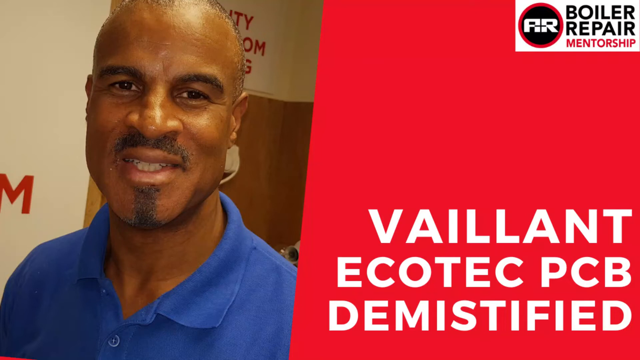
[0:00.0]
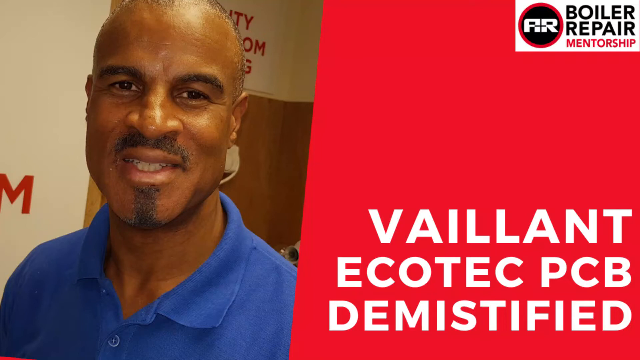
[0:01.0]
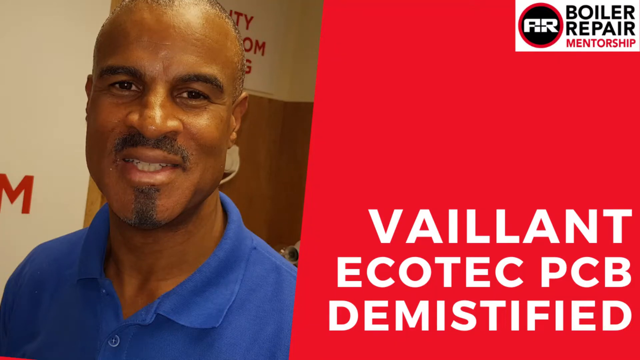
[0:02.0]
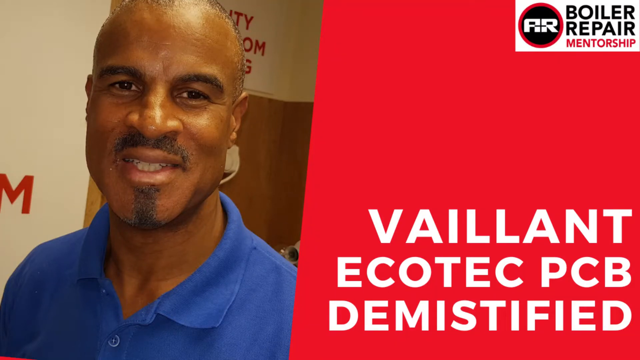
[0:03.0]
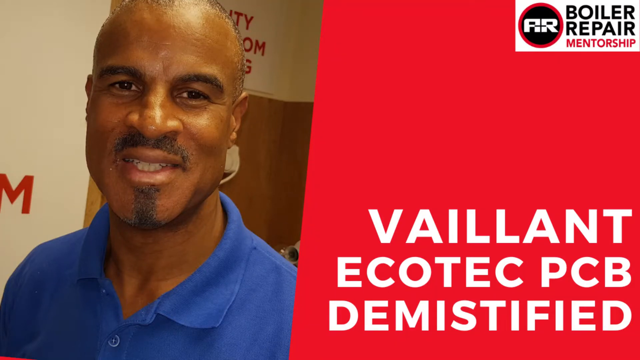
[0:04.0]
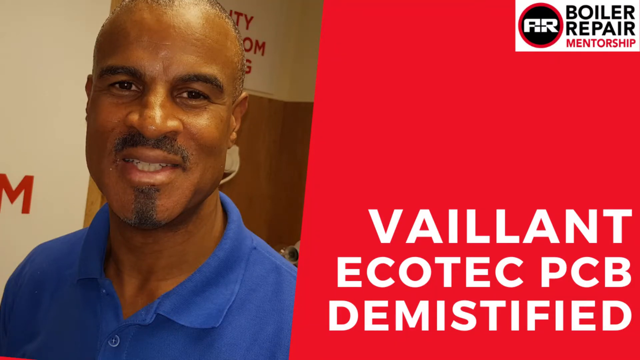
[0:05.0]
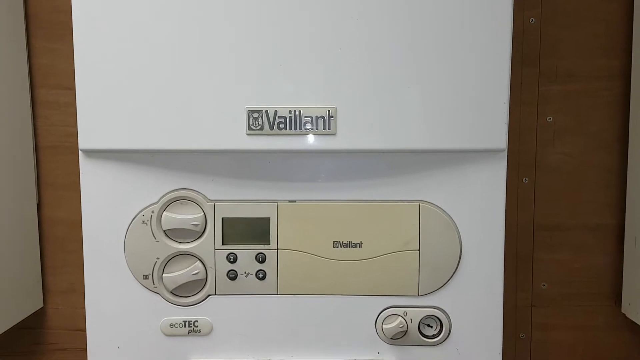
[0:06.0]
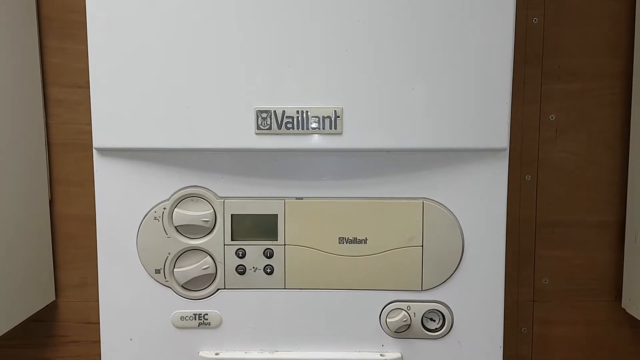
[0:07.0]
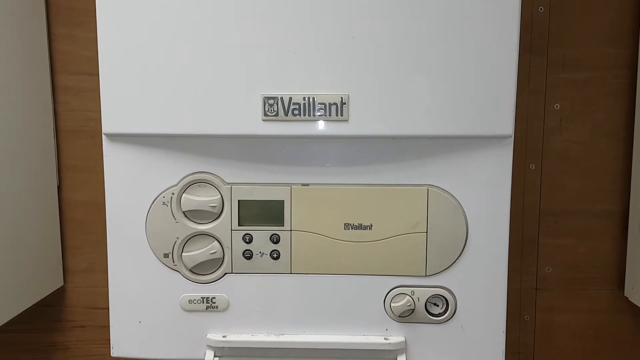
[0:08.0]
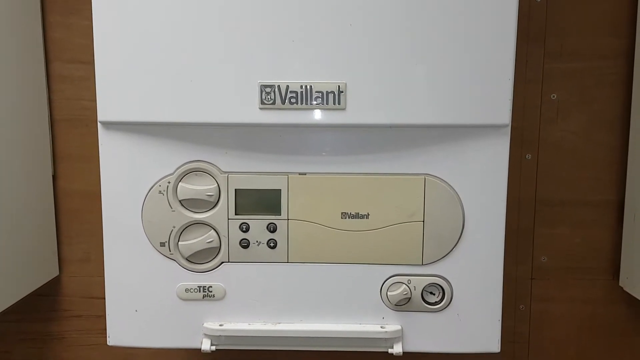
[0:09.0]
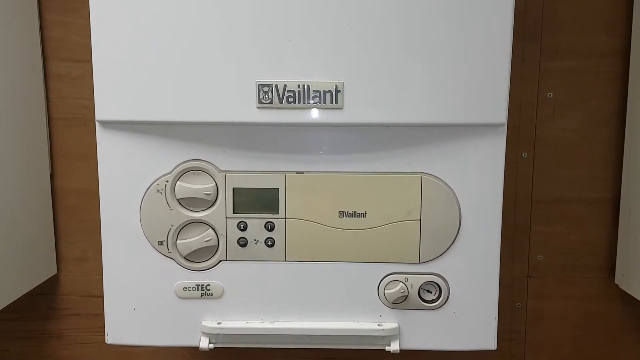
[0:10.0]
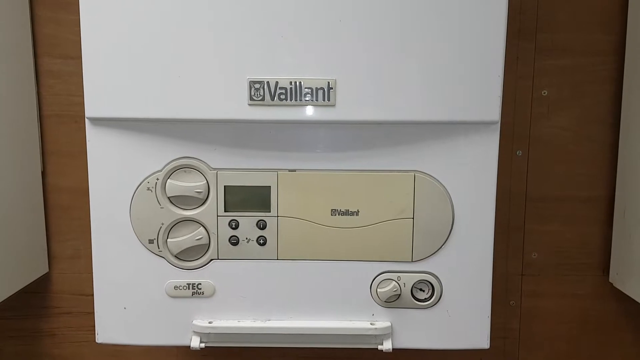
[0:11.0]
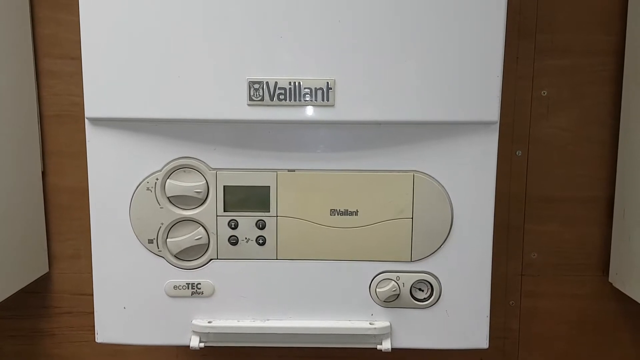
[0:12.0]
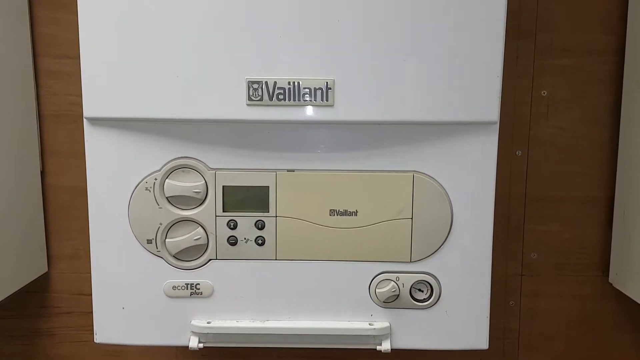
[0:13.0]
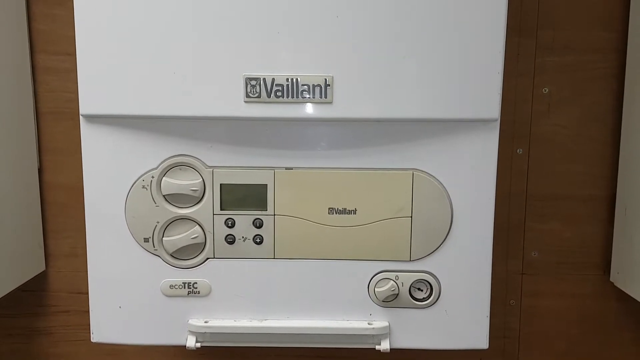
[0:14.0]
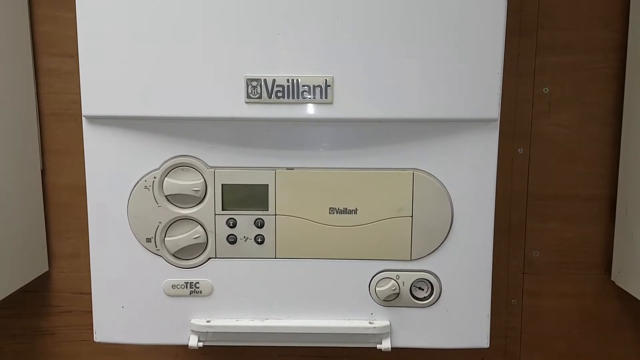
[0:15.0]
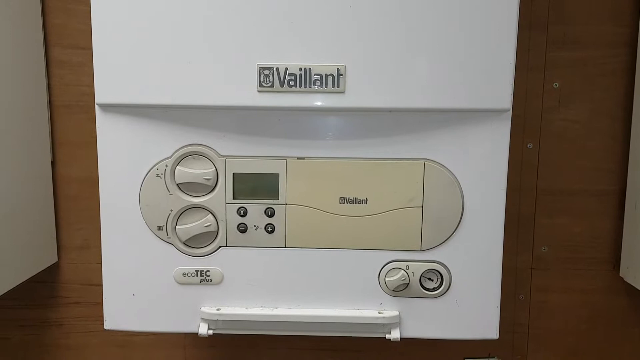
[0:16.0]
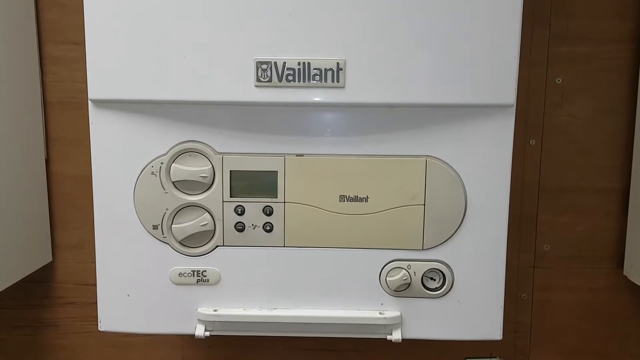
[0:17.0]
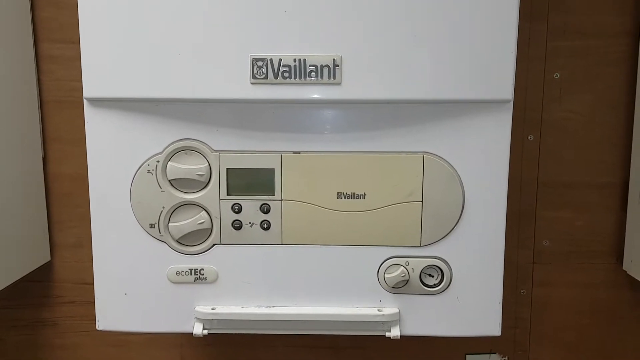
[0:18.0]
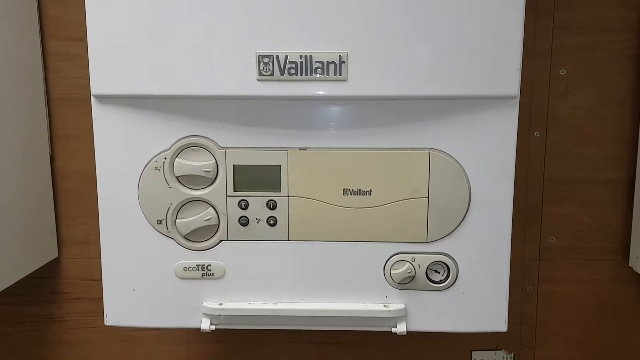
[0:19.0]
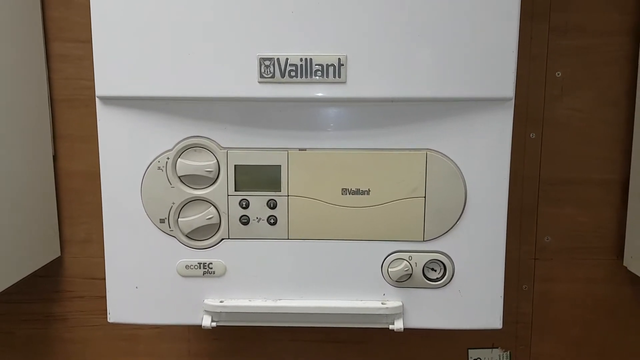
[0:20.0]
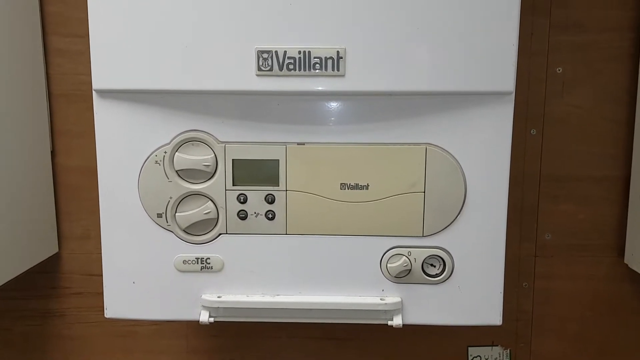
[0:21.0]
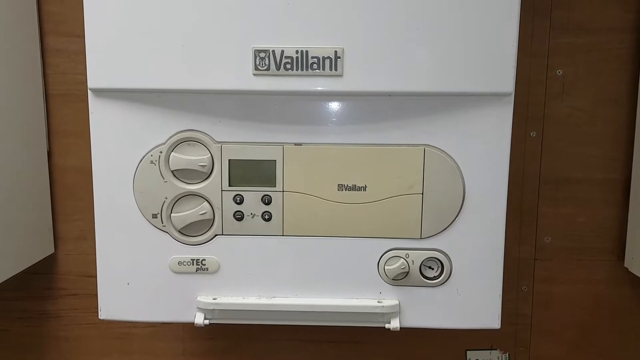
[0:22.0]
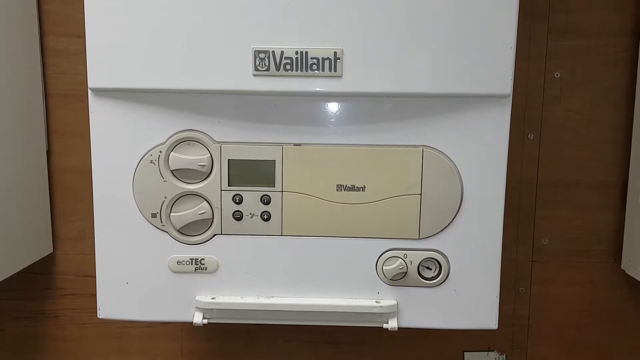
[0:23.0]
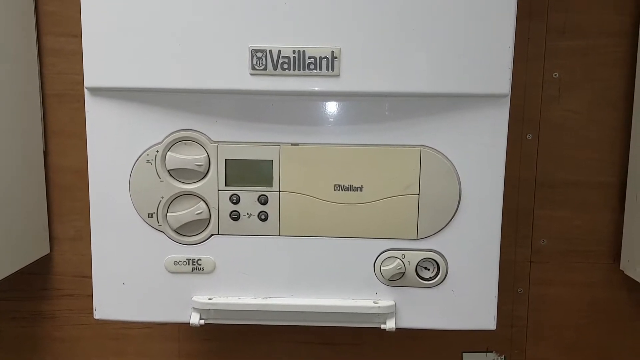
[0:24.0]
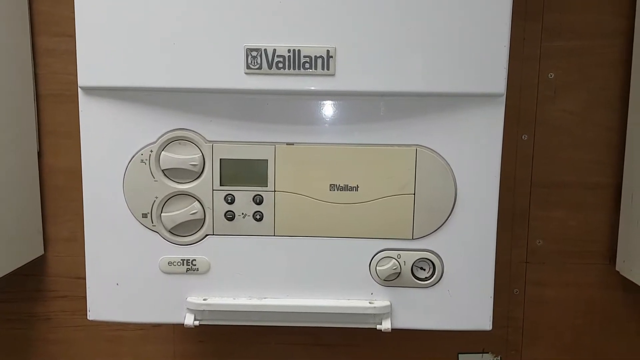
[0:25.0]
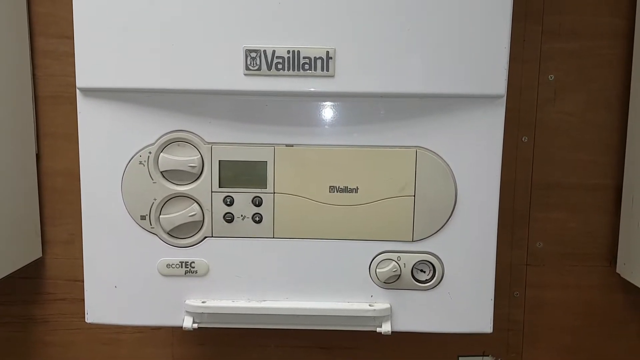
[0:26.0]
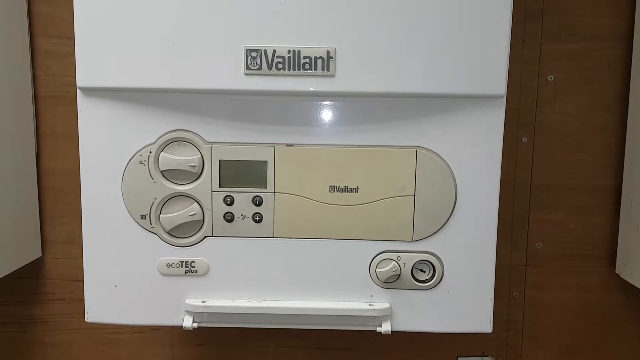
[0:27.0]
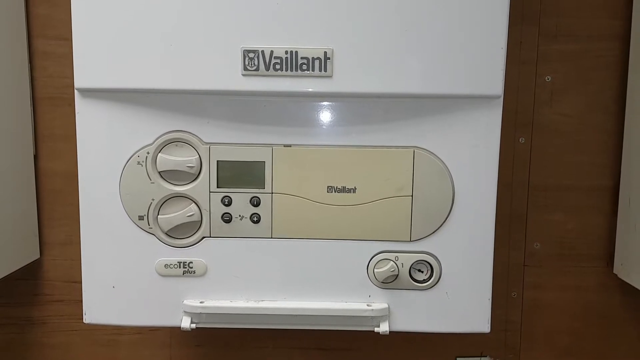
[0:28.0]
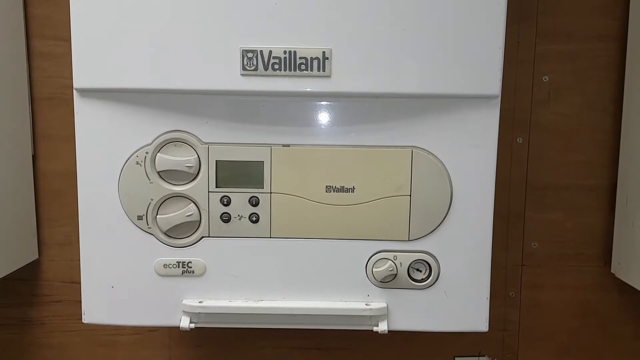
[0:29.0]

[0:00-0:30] A title names VAILLANT Ecotech PCB Demystified, by AR, Boiler Repair Mentorship. A Vaillant device is shown: a plastic-looking unit that appears to be hanging on a wall. The Ecotech device has two knobs that seem to adjust something; it almost looks like an air conditioning unit. It looks like an old device, from around the 1970s or 1980s, and does not look new at all.